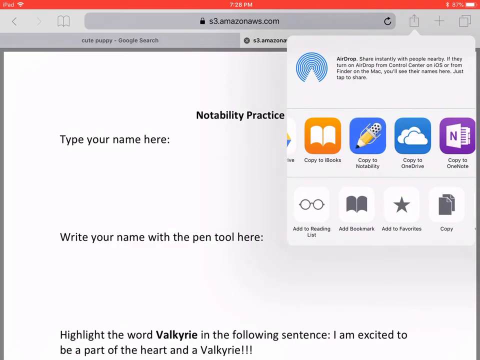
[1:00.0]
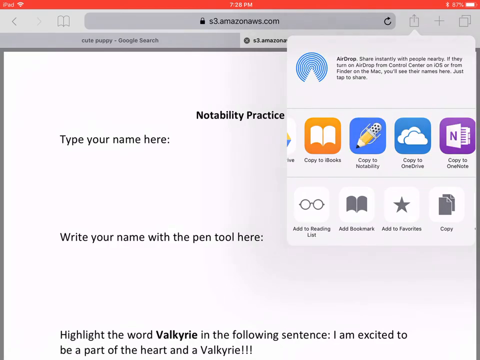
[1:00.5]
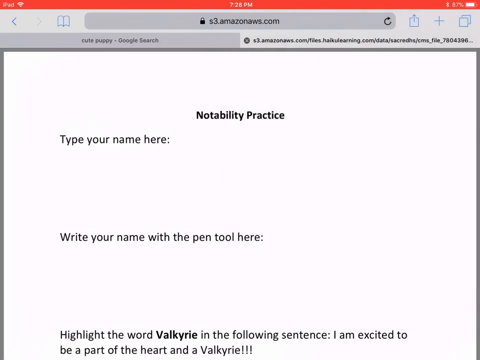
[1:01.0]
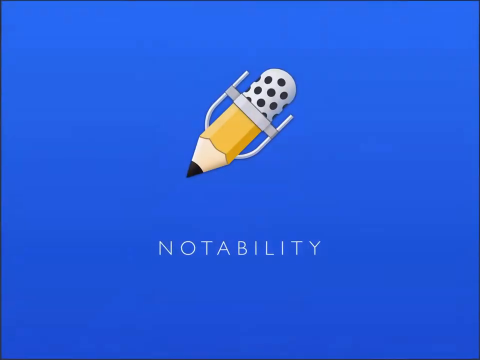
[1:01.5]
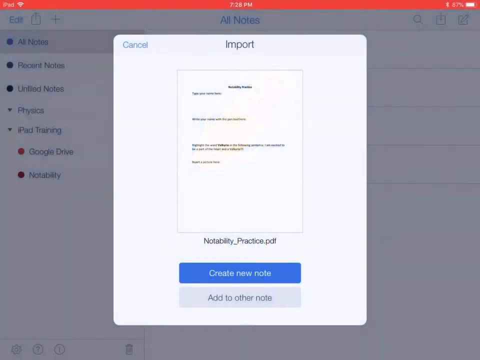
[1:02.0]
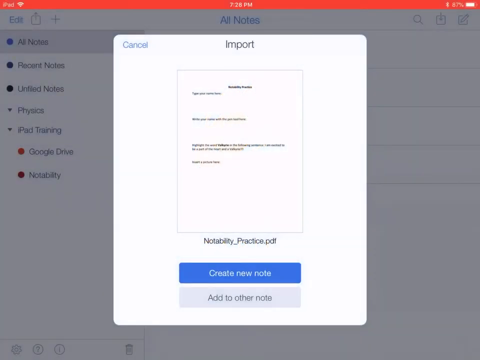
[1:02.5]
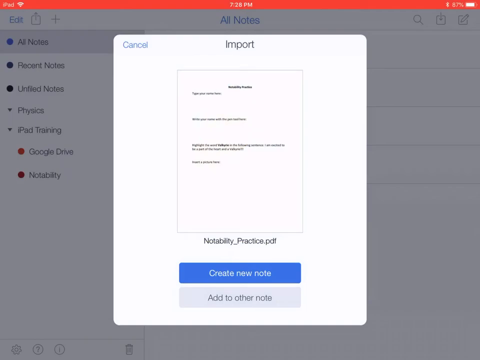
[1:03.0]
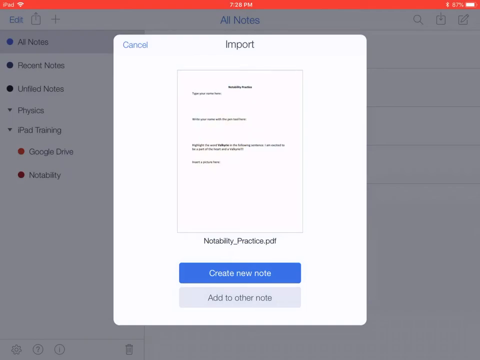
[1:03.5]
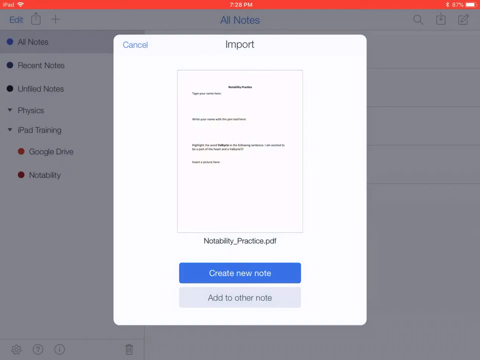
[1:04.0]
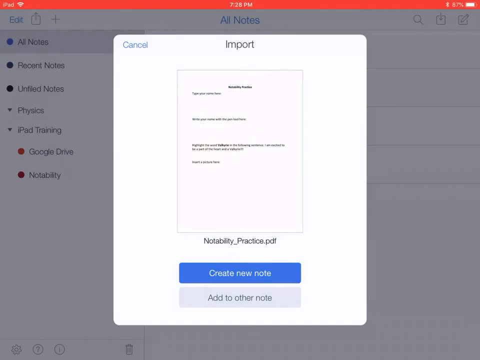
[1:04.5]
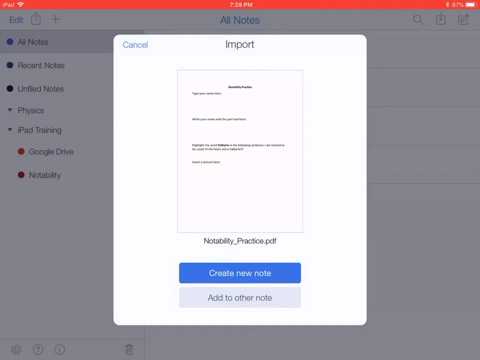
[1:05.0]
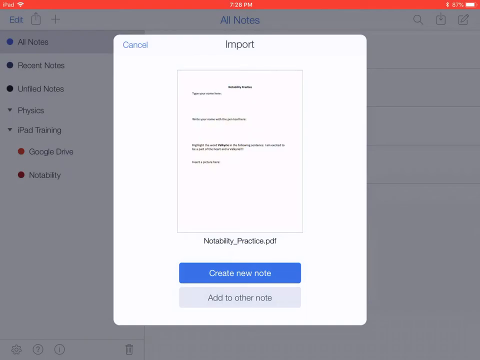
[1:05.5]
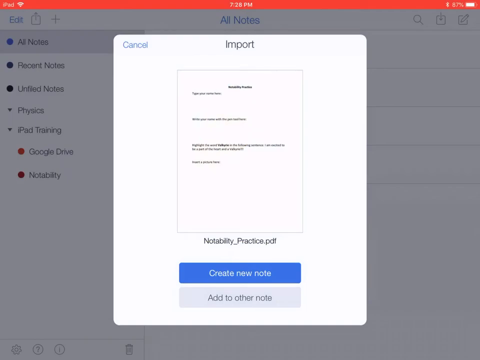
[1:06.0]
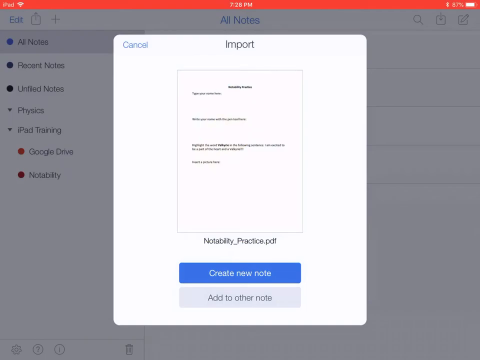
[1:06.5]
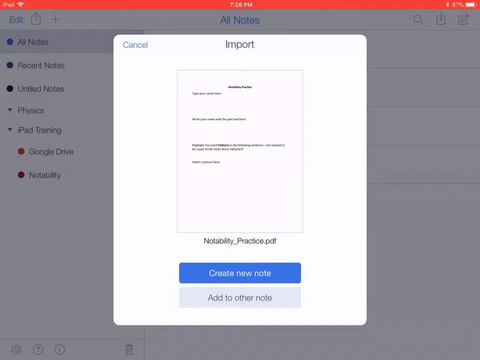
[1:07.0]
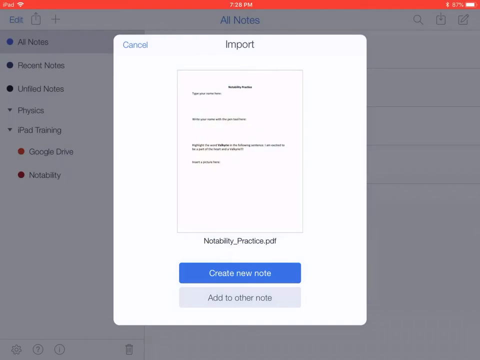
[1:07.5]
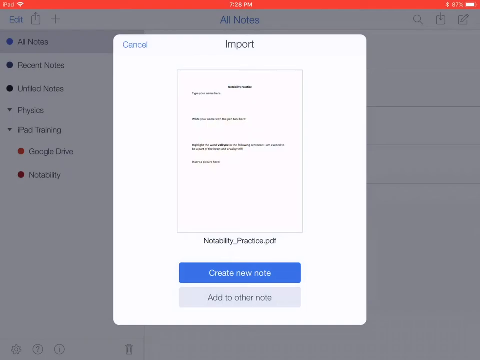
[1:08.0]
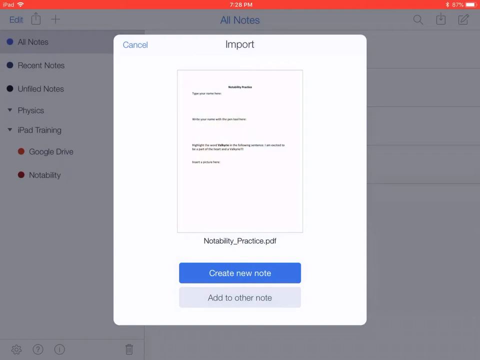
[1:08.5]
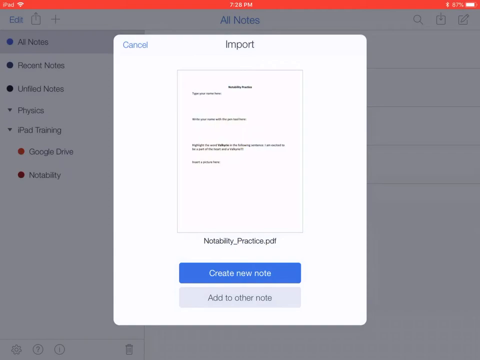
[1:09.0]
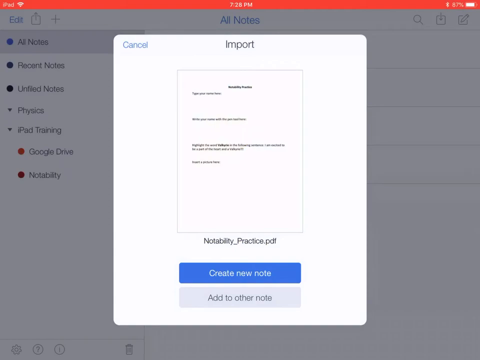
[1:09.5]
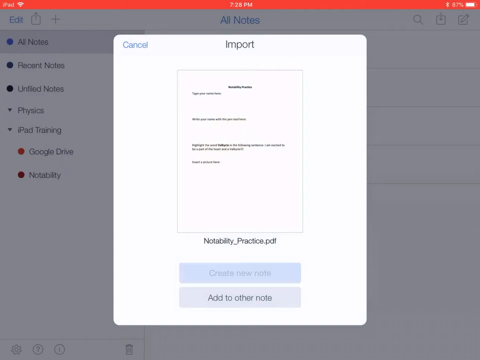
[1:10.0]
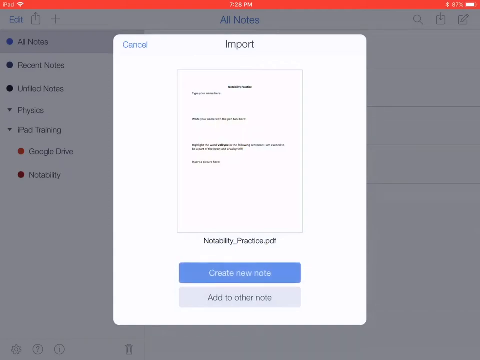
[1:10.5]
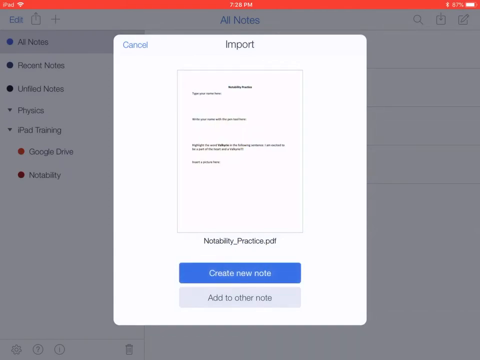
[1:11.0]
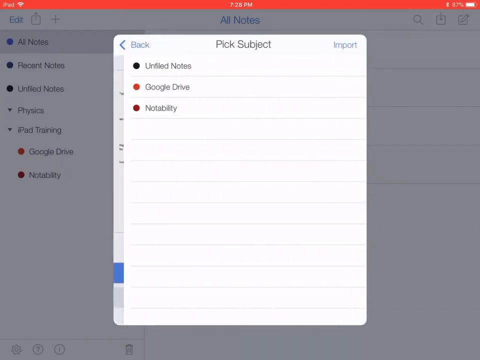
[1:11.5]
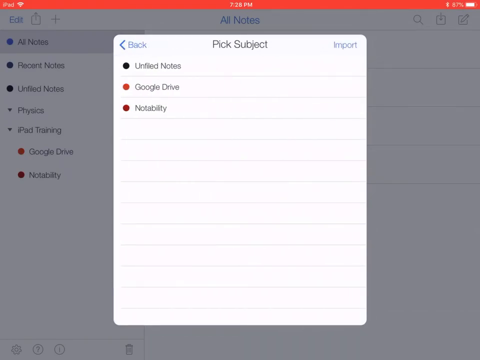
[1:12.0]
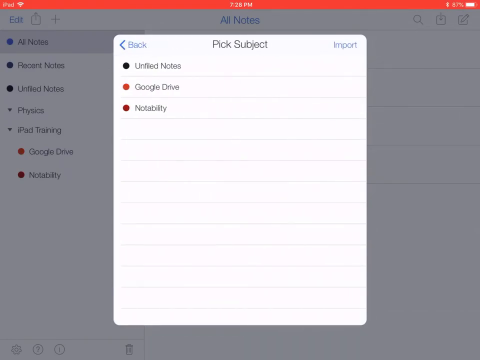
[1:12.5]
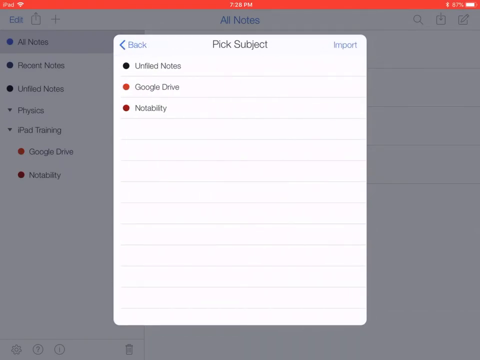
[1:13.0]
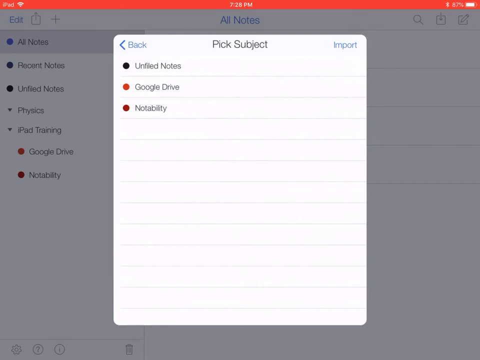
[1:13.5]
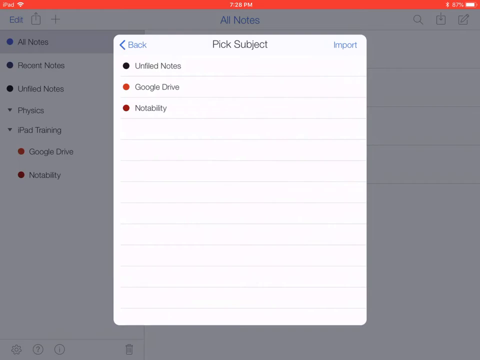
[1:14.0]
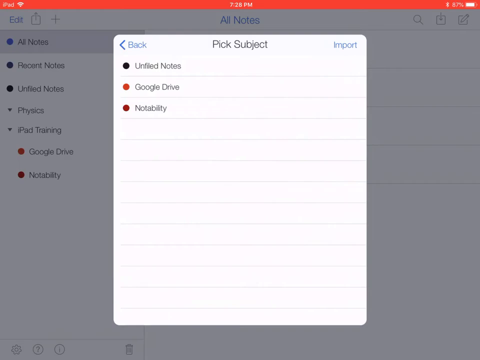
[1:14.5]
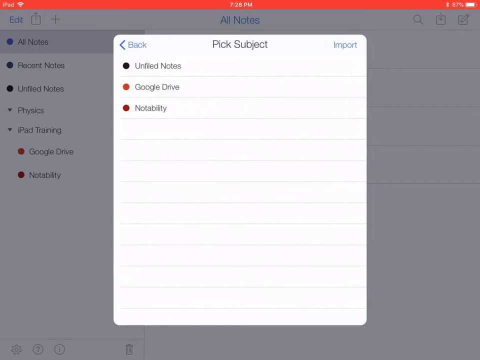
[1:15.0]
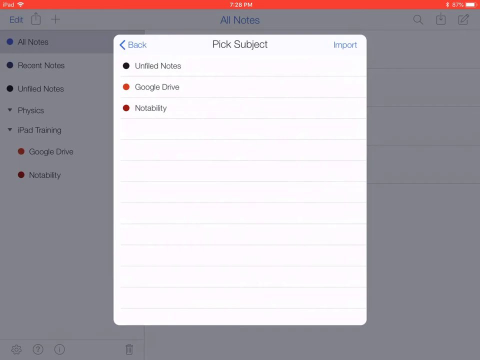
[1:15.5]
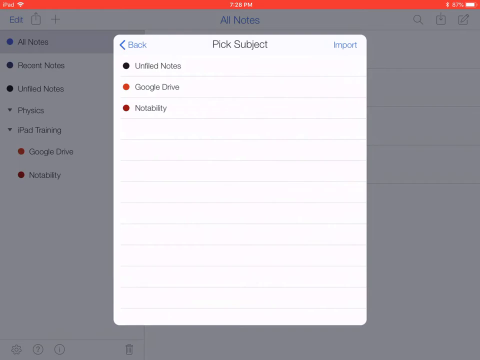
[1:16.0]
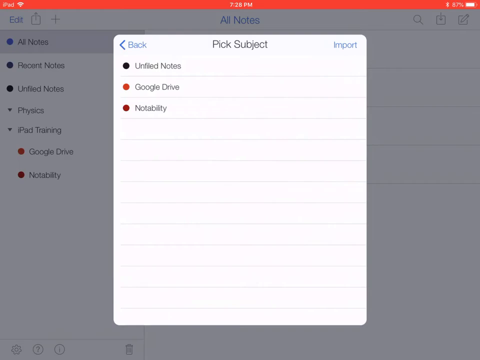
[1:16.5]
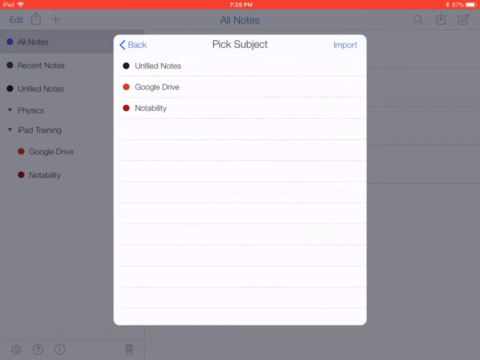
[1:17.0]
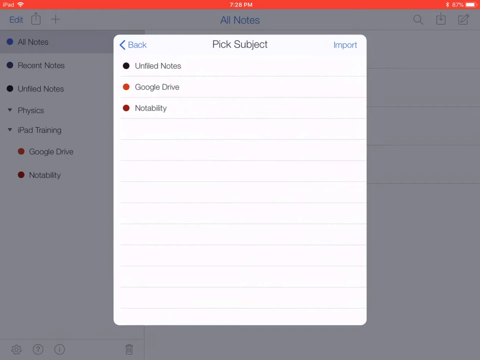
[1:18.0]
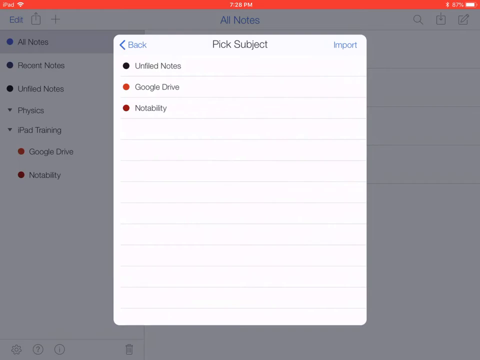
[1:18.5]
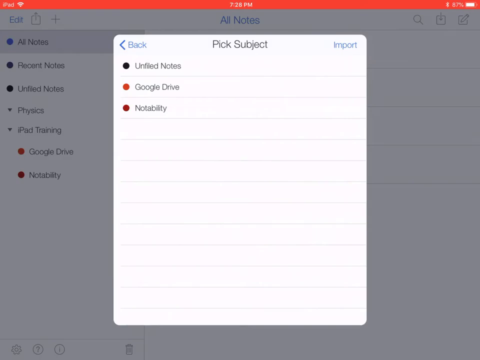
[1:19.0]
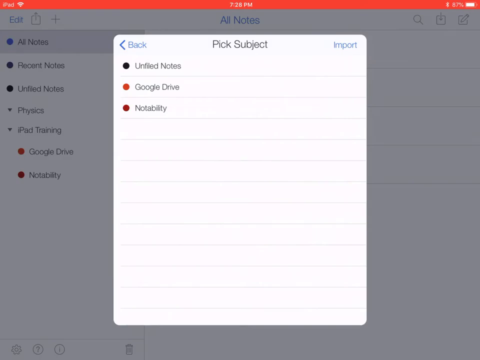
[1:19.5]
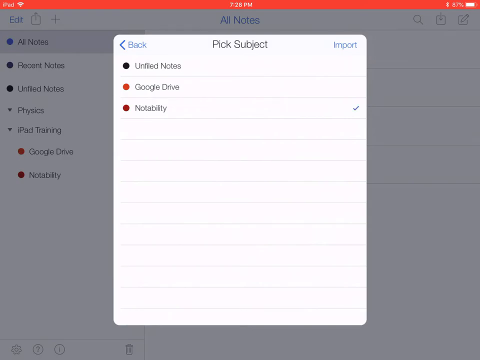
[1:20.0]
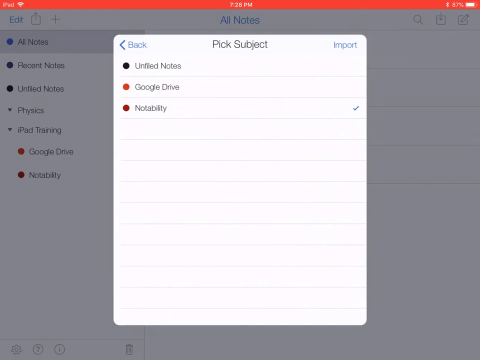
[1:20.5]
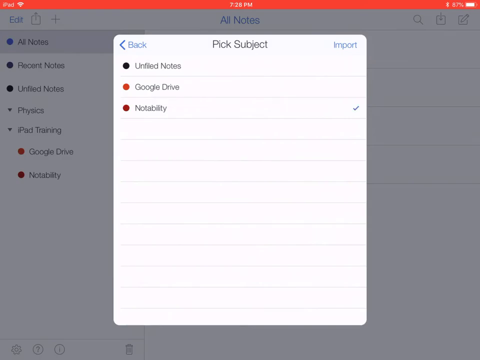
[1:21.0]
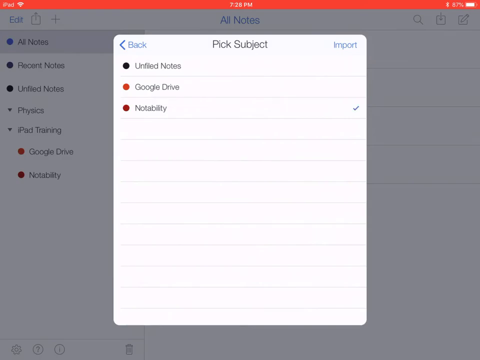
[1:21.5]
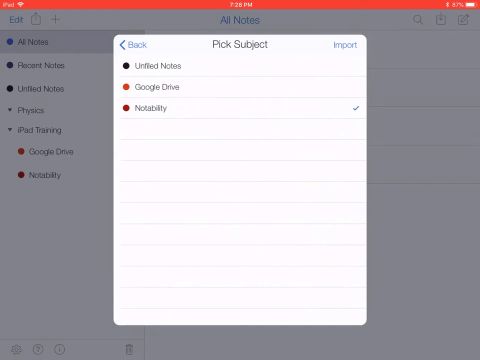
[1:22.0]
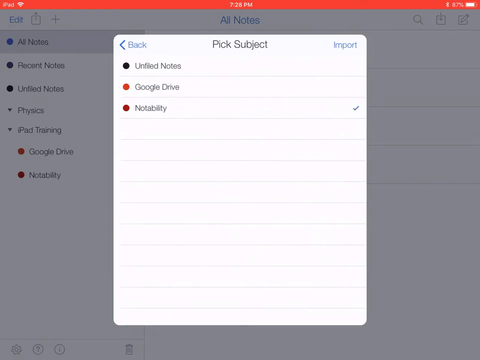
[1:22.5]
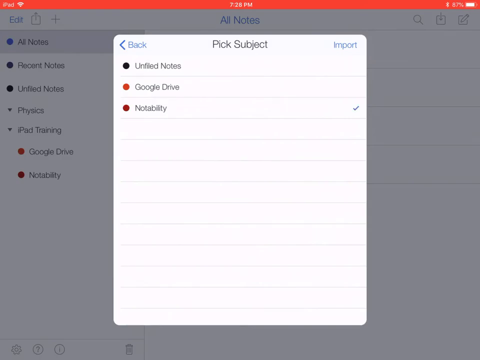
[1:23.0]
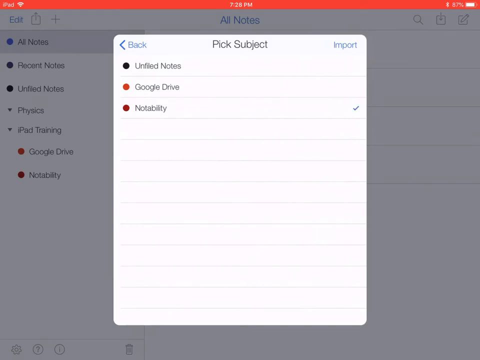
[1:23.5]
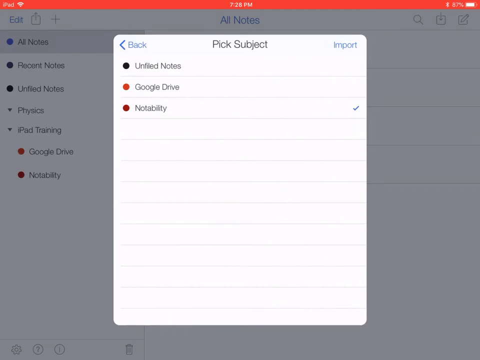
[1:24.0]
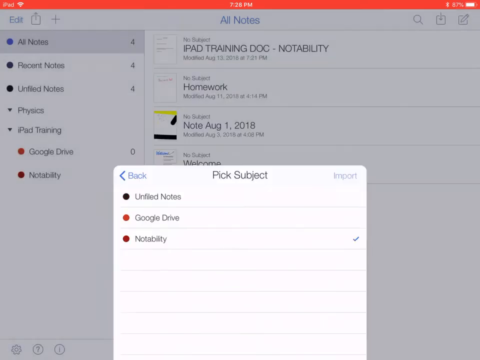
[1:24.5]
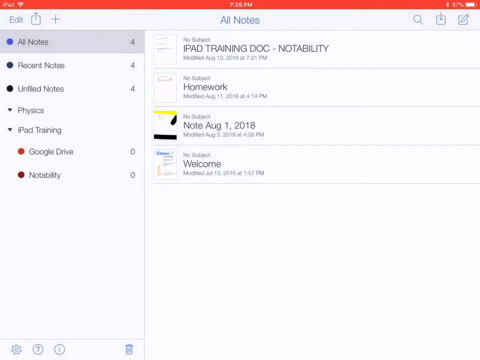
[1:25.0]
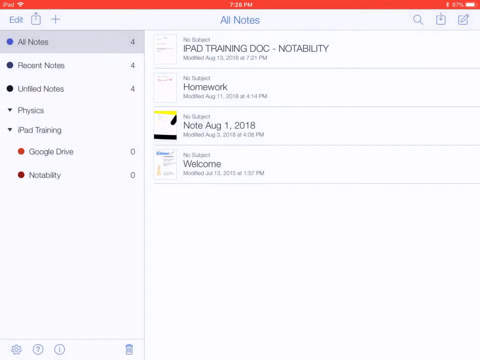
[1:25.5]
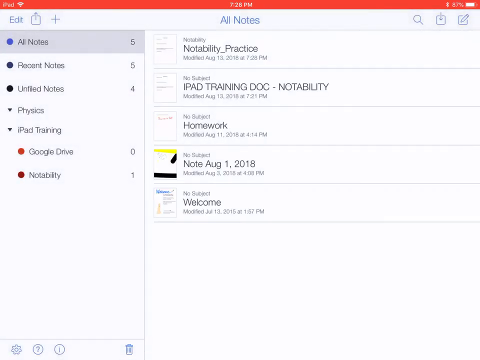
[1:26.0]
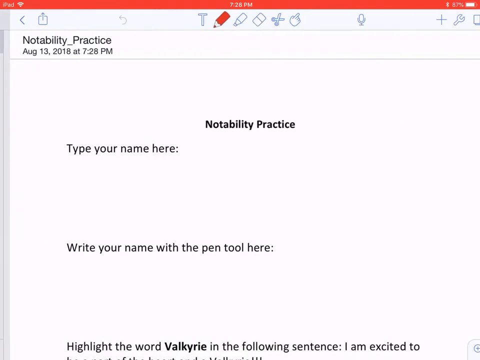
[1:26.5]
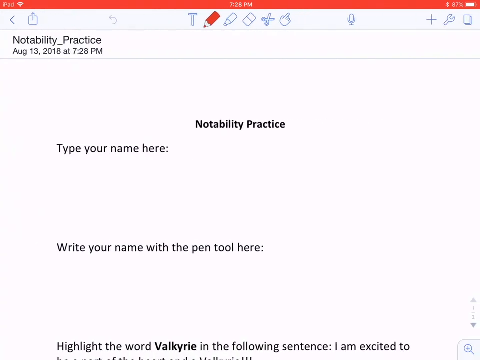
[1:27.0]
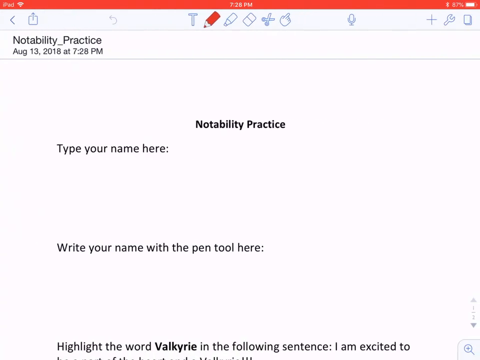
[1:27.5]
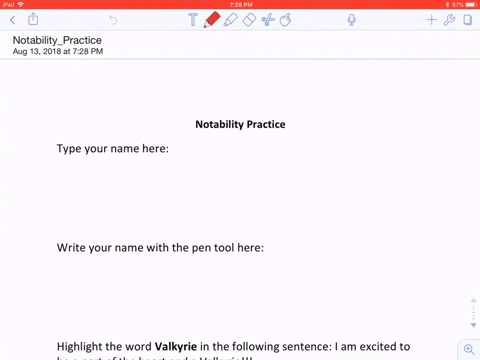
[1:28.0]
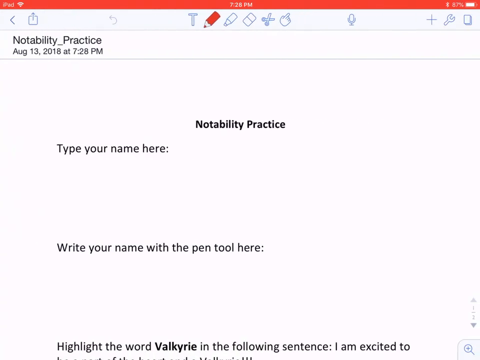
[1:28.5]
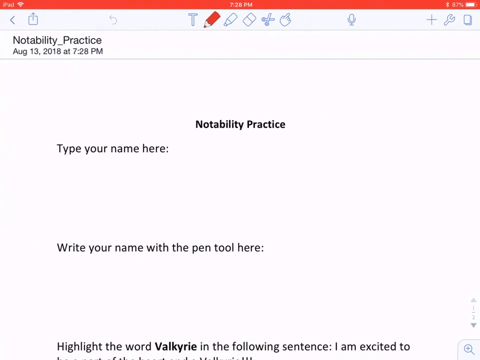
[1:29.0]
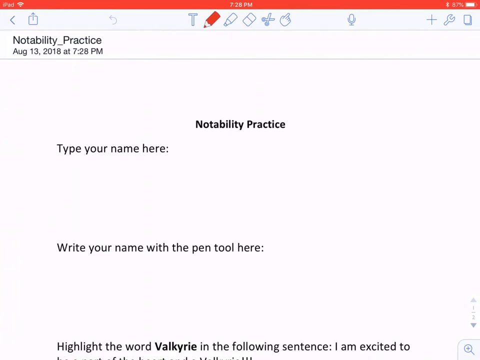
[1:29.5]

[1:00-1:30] The user clicks the Copy to Notability icon in the menu from the top left corner. The screen changes to a blue screen with "Notability" written on it and a pen icon, presumably the Notability app's iconography. A white pop-up then appears on top of a Notability user interface, showing the document "Notabilitypractice.pdf" with "import" at the top. The interface offers the option to create a new note or add to other notes; Notability seems to be a note-taking platform. After about 10 seconds on this screen, the user clicks the Create New Note button, which leads to a "pick subject" screen with the options unfilled notes, Google Drive, or Notability. After a few seconds, the user taps Notability and a tick appears next to it.